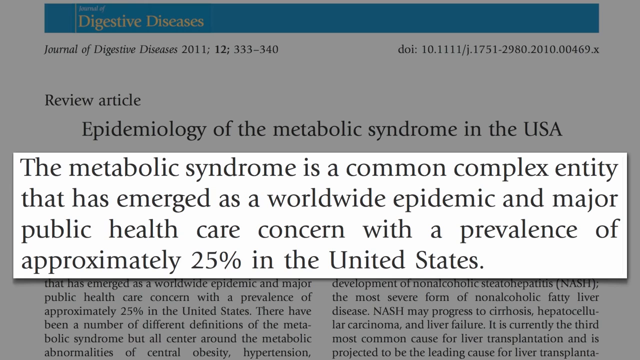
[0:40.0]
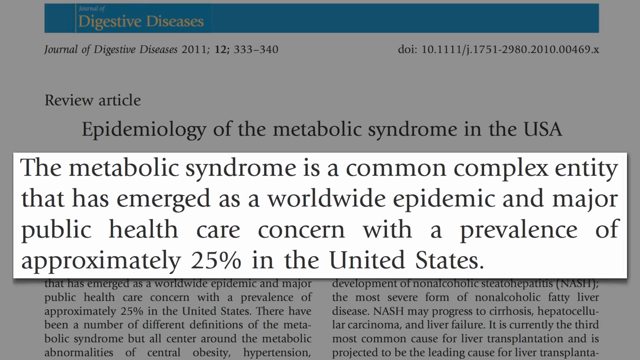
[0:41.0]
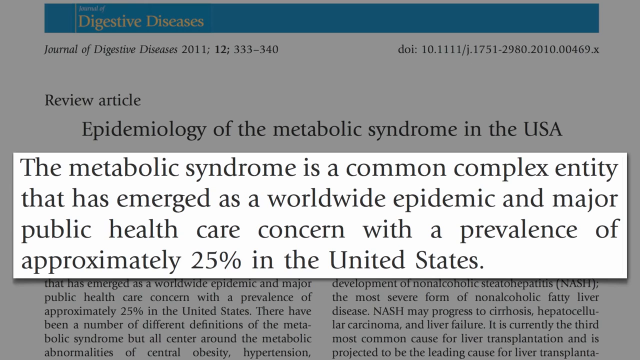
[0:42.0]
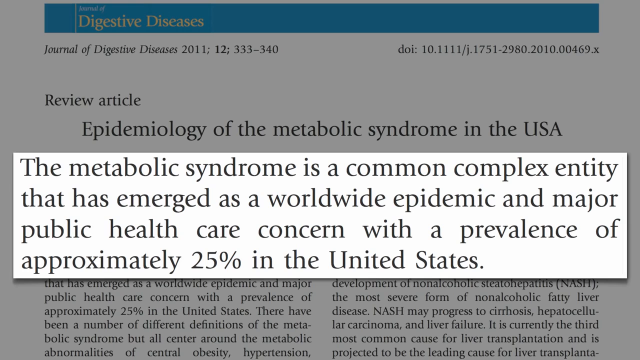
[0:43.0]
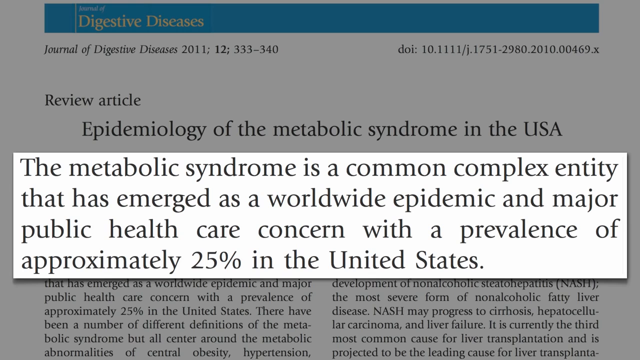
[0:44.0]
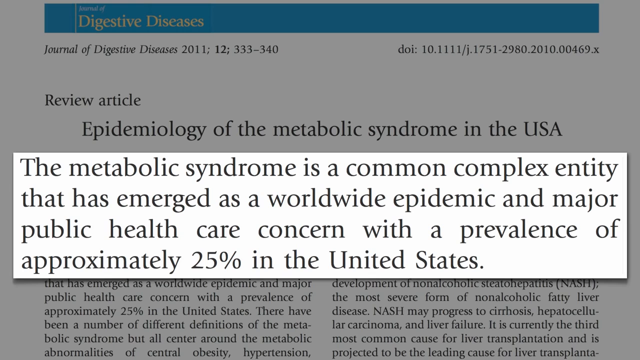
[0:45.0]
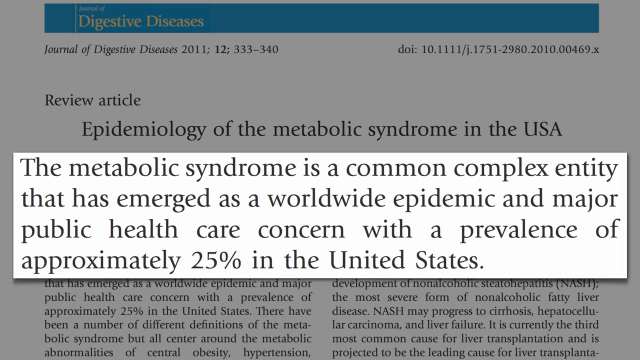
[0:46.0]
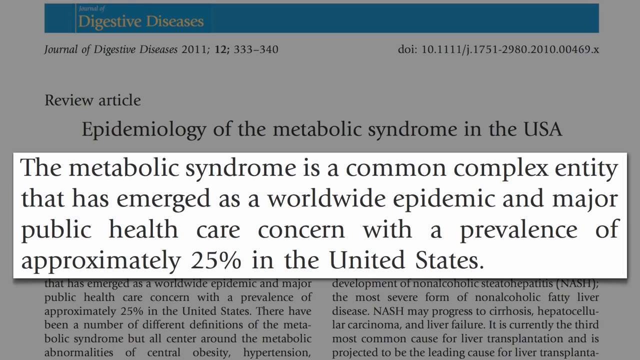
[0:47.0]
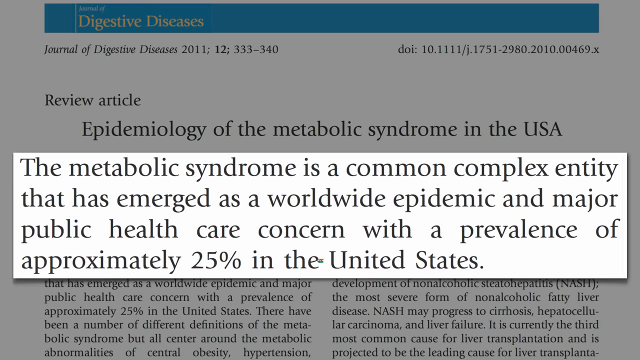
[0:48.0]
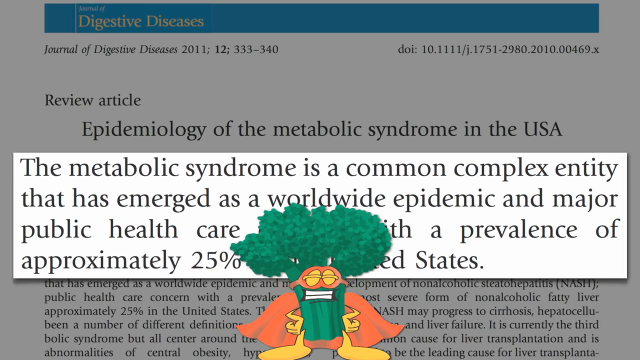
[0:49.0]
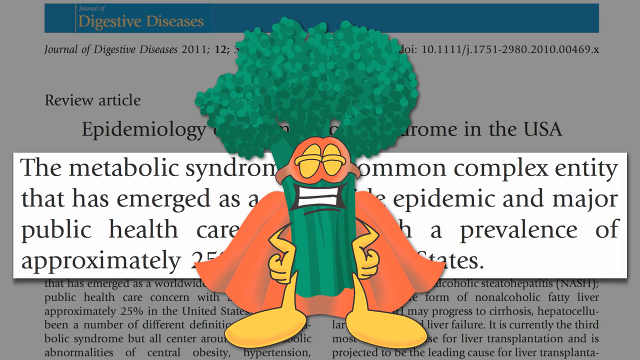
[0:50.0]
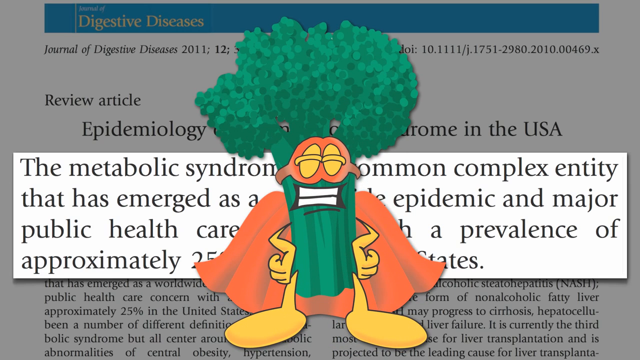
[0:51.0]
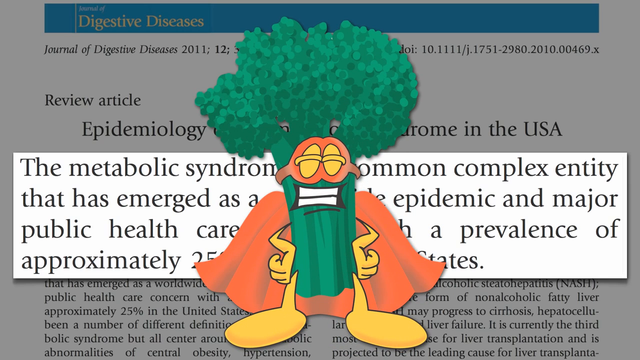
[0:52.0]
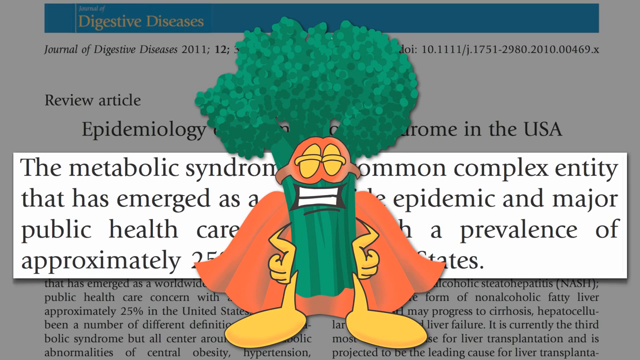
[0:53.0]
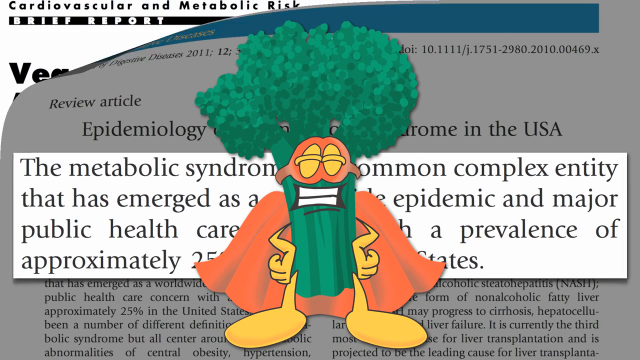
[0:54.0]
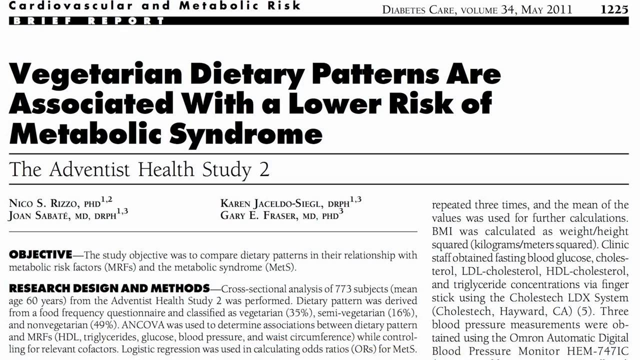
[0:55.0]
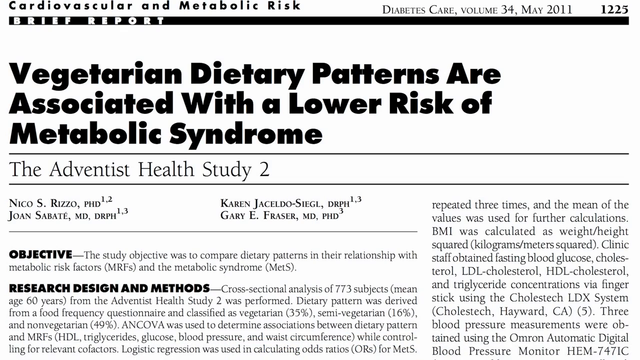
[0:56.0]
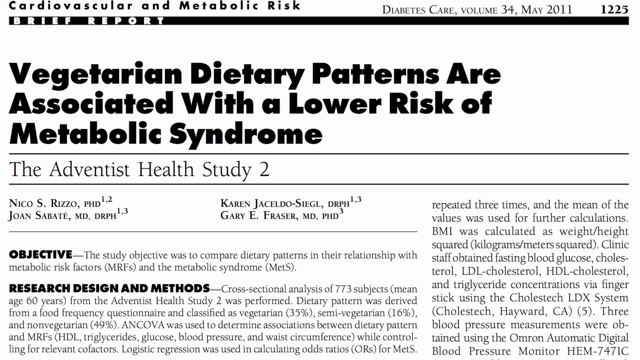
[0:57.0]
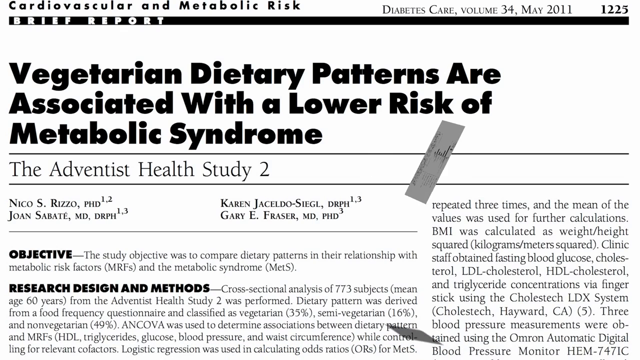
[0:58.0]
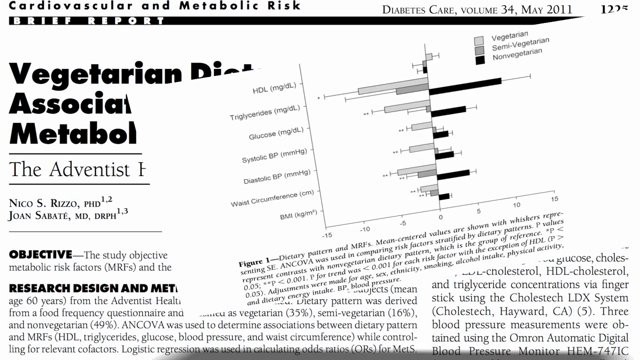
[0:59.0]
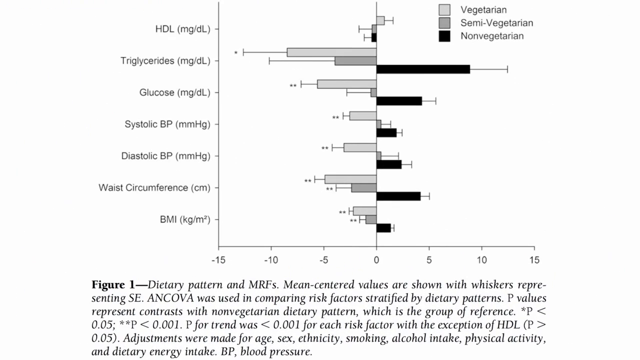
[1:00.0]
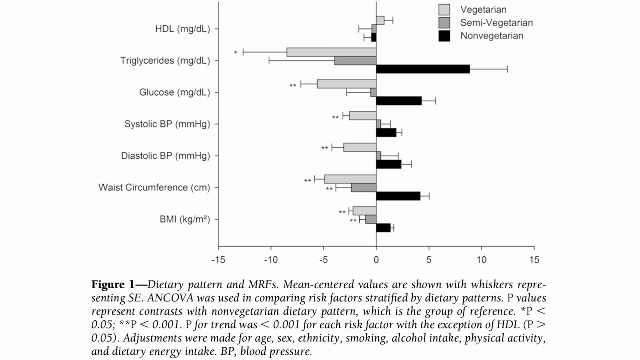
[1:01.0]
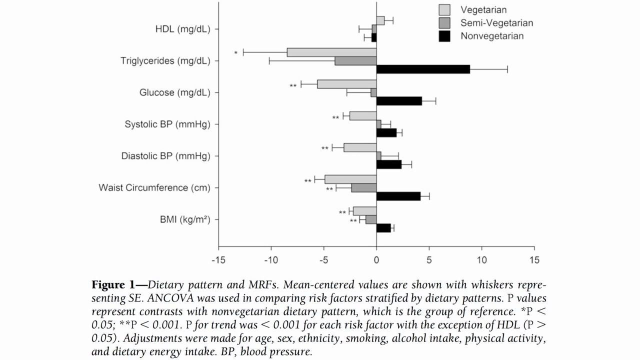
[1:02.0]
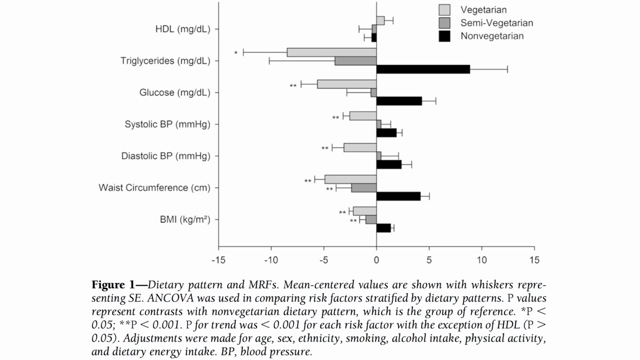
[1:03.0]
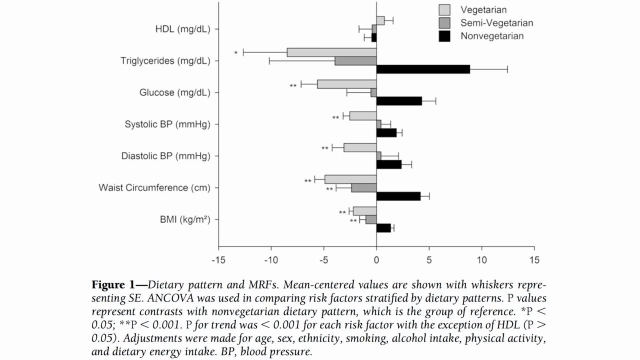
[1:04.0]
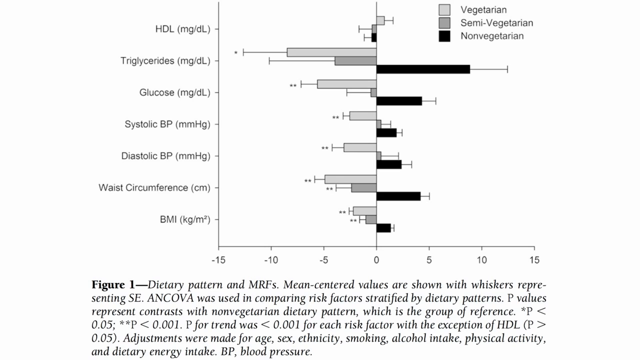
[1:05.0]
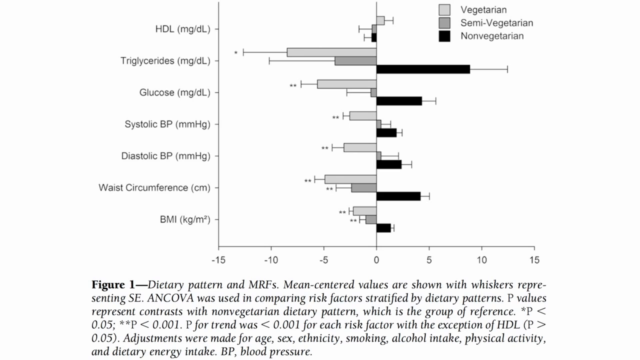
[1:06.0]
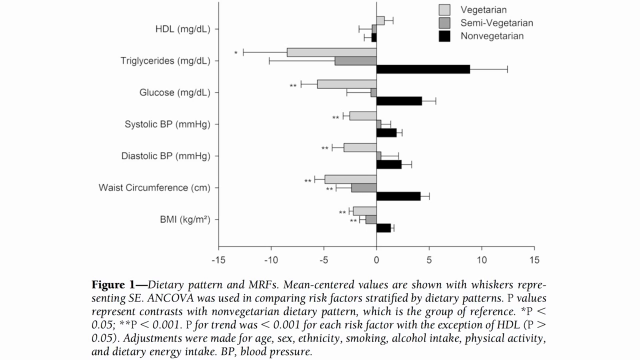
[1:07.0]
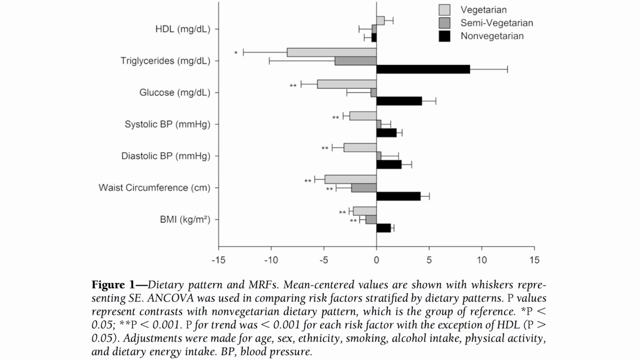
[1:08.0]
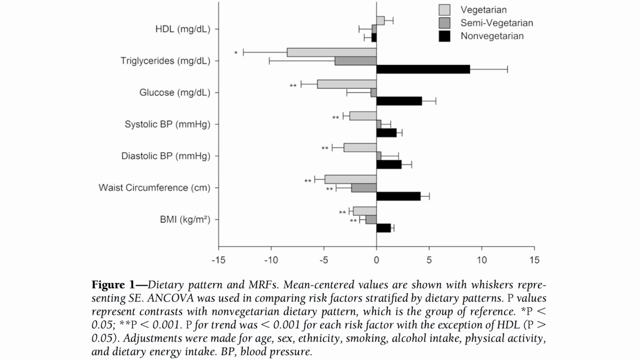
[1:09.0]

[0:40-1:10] In the slideshow, an article is on screen with a white box overlaying it, highlighting a large section of the article in simple black text: "the metabolic syndrome is a common complex entity that has emerged as a worldwide epidemic and major public health care concern with a prevalence of approximately 25% in the United States." The slide remains for several seconds. Suddenly an illustrated, cartoonish figure of what looks like a broccoli superhero comes forward. A broccoli floret at the top forms its hair; it has a square mouth with white teeth and closed eyes, covered by orange sunglasses. Its cartoonish hands look like they are placed on its hips, which are the stalk of the broccoli, and it has large oversized yellow feet and an orange cape. The slide then switches by turning the top left-hand page downward, almost as if pulling it out and away, revealing an article from Diabetes Care magazine underneath. The title, in bold black font, reads "Vegetarian Dietary Patterns are Associated with a Lower Risk of Metabolic Syndrome," and beneath it is "The Adventist Health Study 2." This looks like a medical health article. The video remains on this screen for several seconds, then a new page comes up from the center as a rectangular shape and moves forward to cover the existing article. This page has a bar graph in the center labeled on the left with "HDL," "Triglycerides," "Glucose," "Systolic BP," "Diastolic BP," "Waist Circumference" and "BMI." Along the bottom, the graph is labeled from -15 to 15, left to right, in increments of 5. Three colors are shown in squares and labeled "vegetarian" for light gray, "semi-vegetarian" for gray and "non-vegetarian" for black. Beneath the chart is the label "Figure 1" with a description of the graph above it.